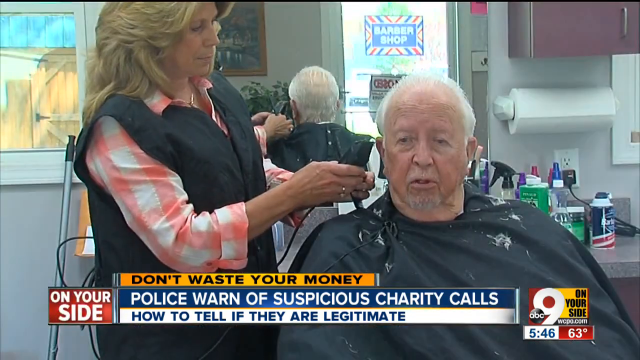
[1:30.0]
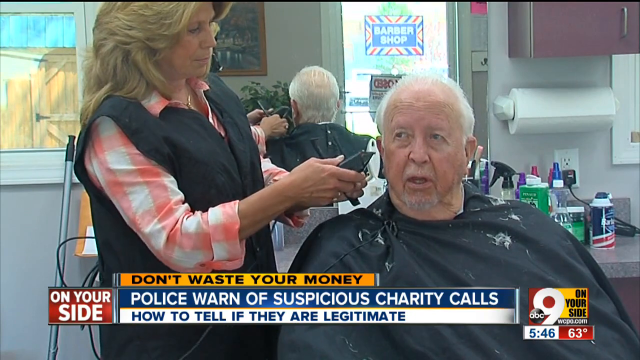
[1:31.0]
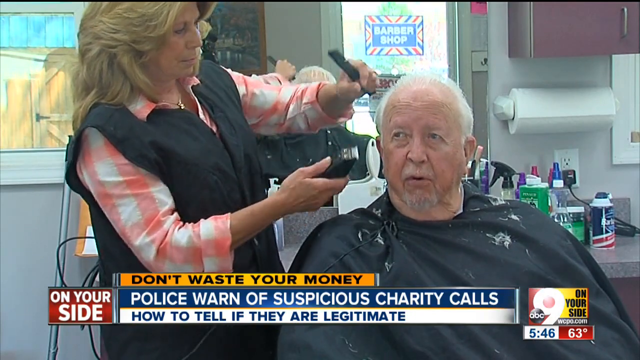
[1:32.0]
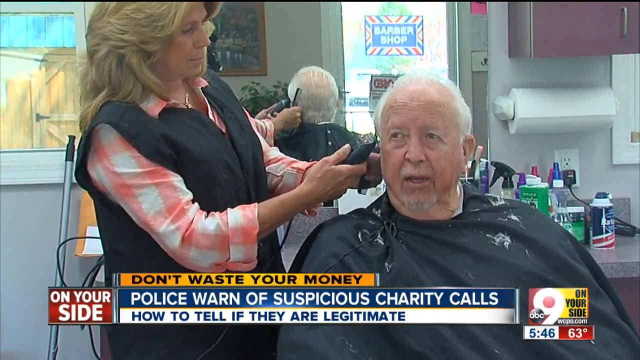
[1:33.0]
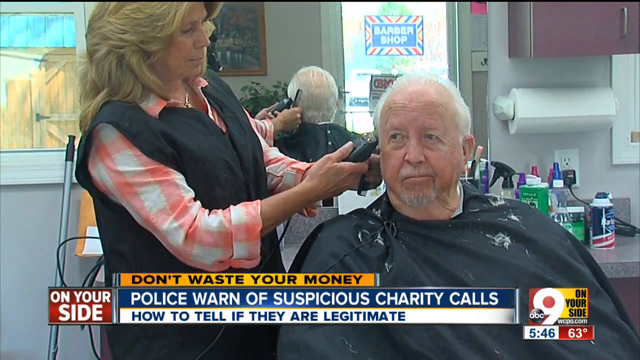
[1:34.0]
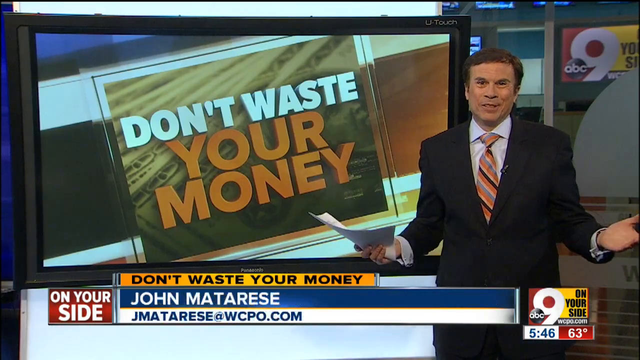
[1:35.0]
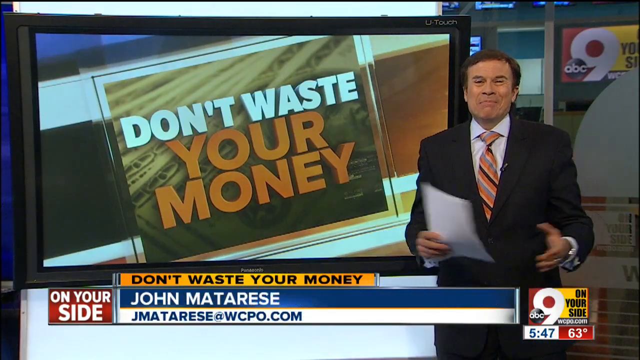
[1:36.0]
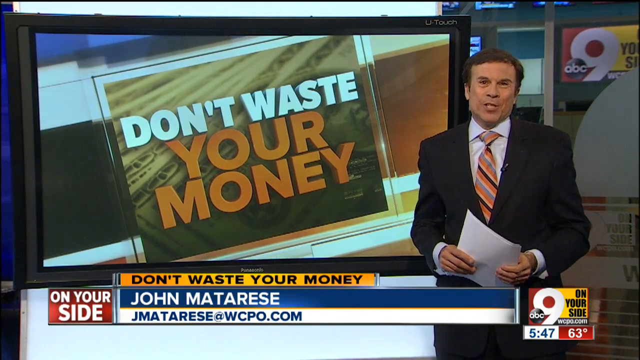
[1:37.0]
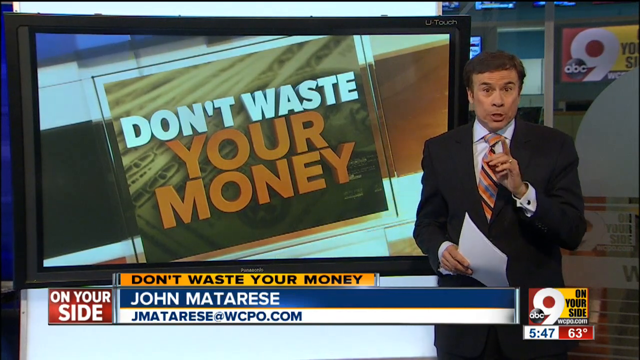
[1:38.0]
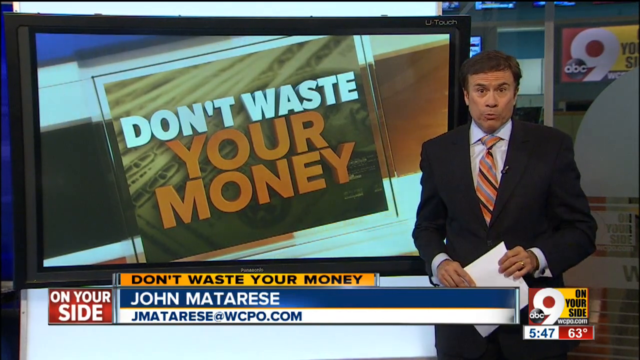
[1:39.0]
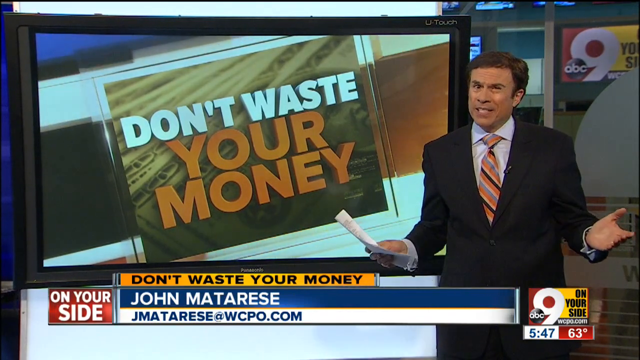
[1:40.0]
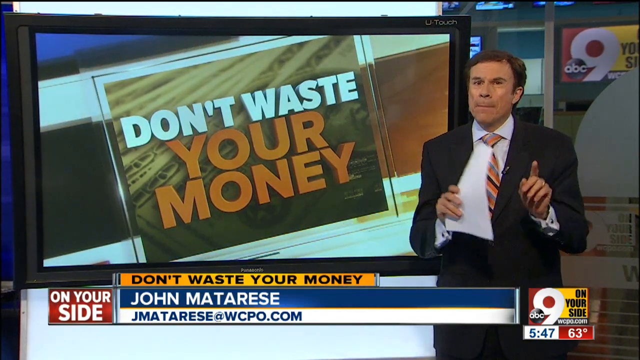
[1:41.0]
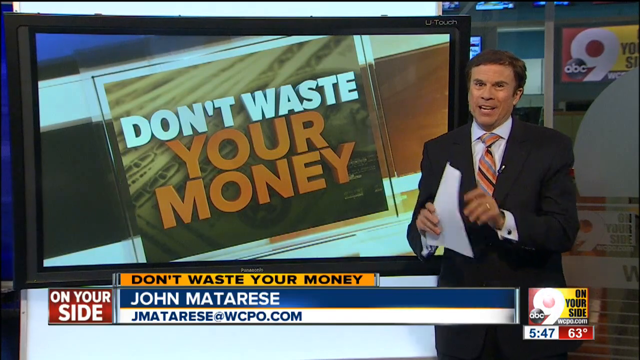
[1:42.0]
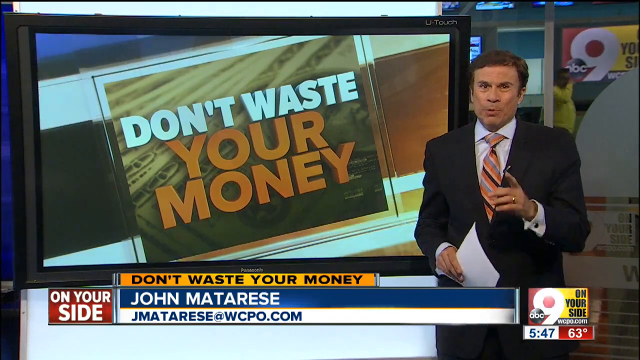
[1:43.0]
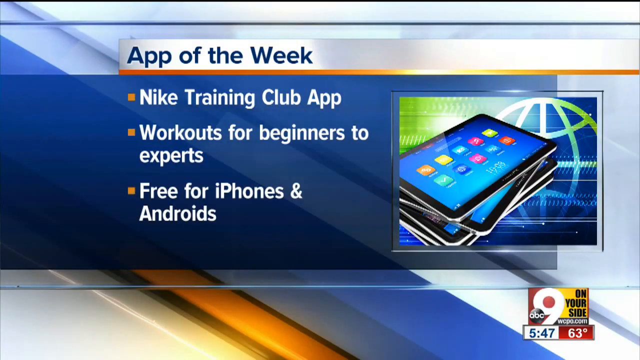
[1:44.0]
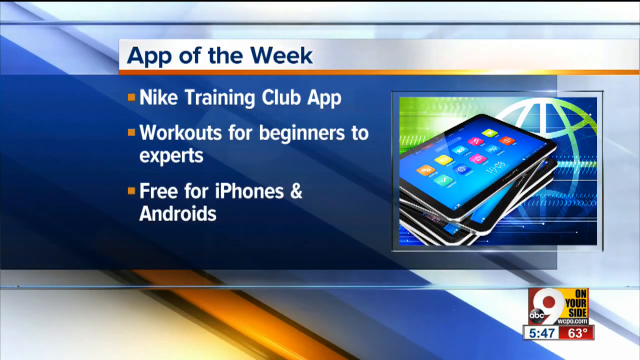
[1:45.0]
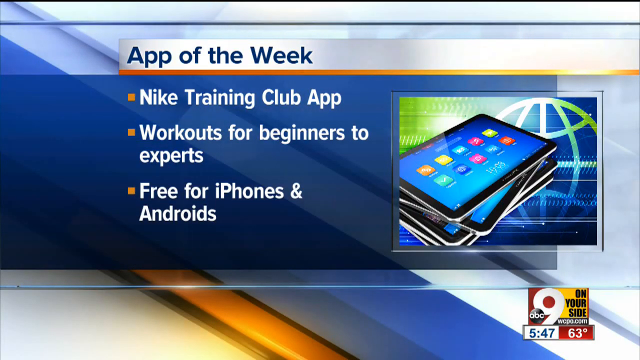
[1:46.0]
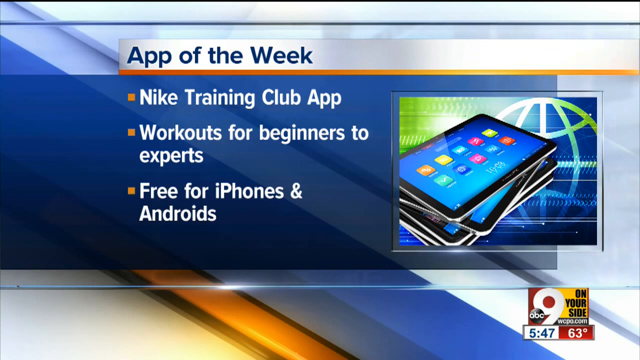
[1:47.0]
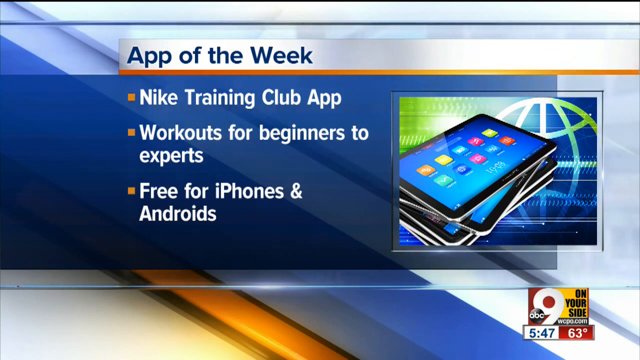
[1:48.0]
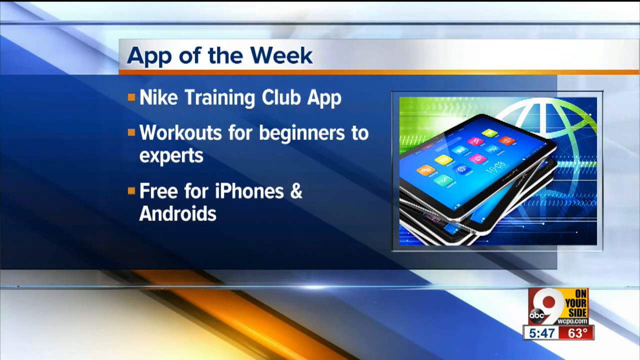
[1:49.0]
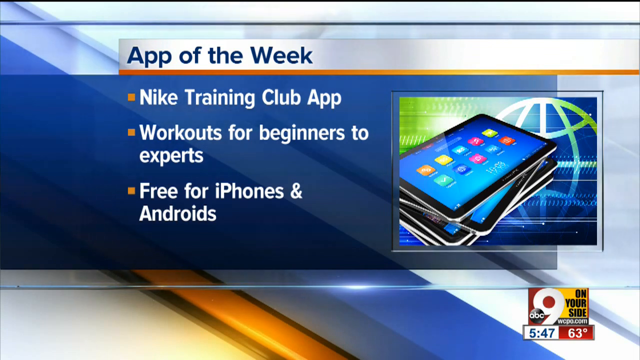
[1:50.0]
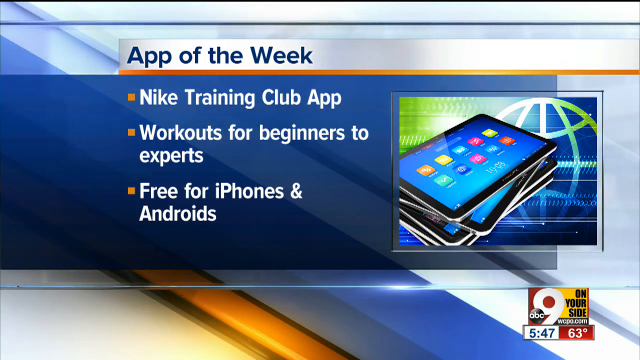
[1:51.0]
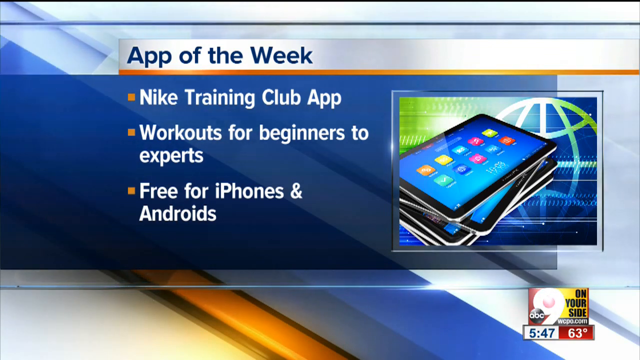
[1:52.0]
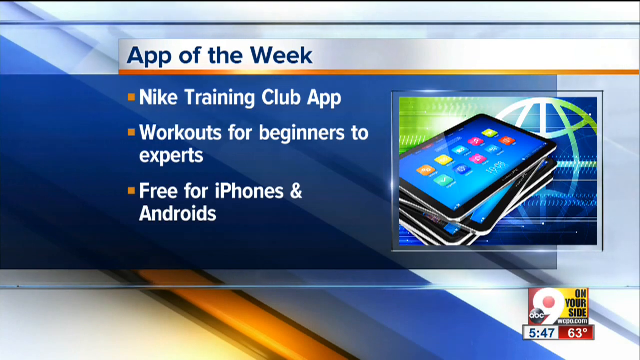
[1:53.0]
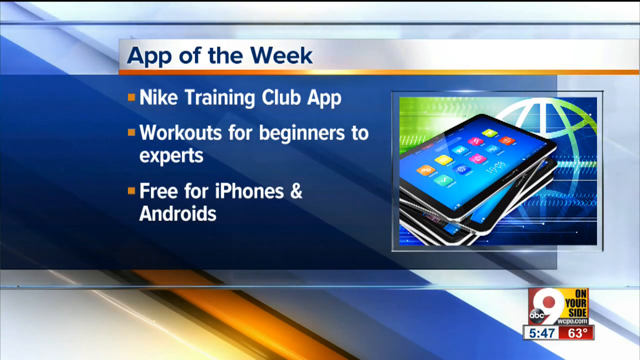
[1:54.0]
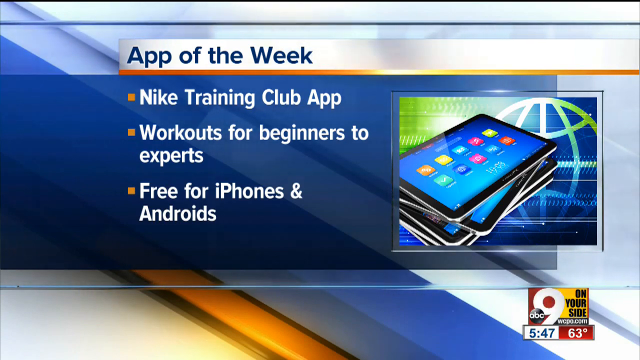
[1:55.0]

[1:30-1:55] The lady with blonde hair wears a pullover jacket and a pink and white shirt and seems to be 40 to 50 years of age. She continues talking with the man while clipping his hair at the salon. John Mataris then appears again. Next, "the app of the week" is written in blue on a white background, followed by information about an app being advertised. Beside that information are tablets, seemingly four or five of them.